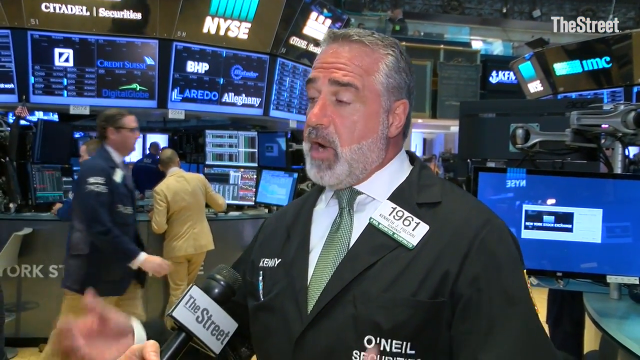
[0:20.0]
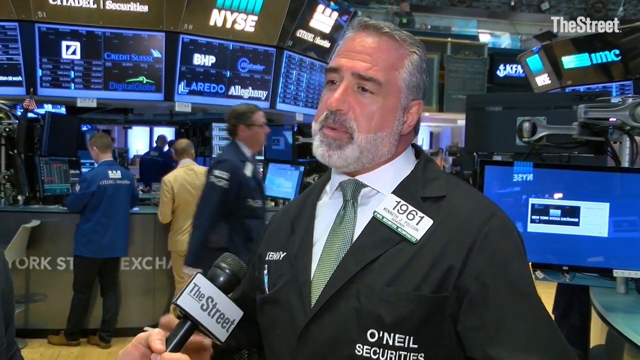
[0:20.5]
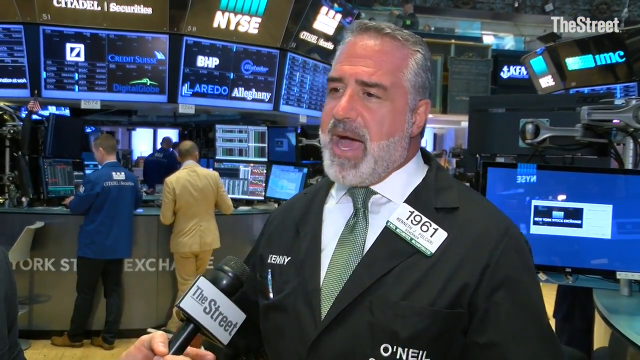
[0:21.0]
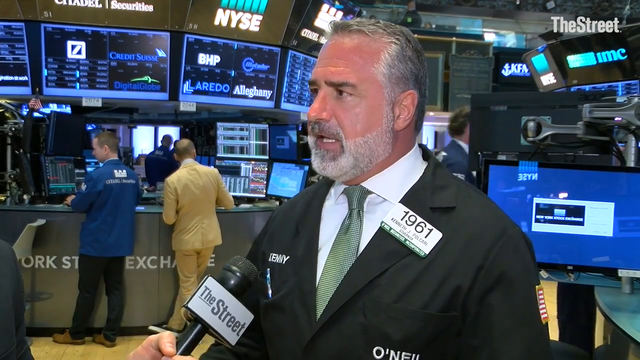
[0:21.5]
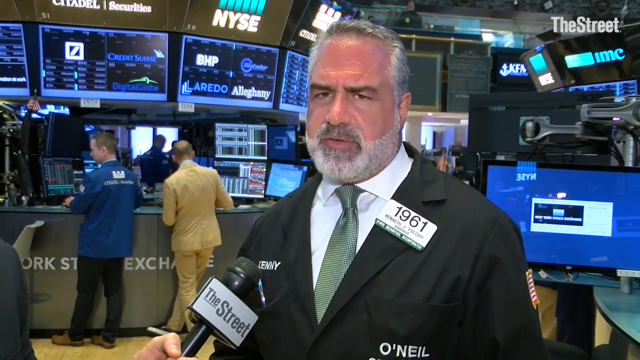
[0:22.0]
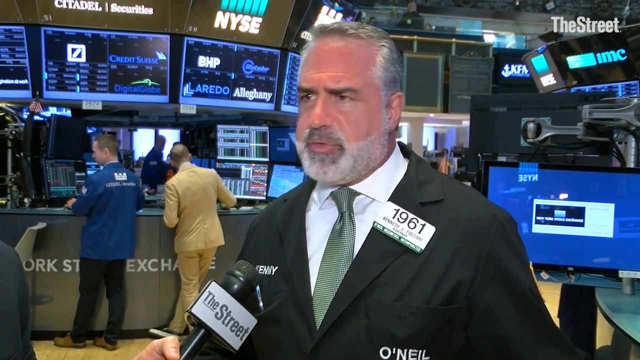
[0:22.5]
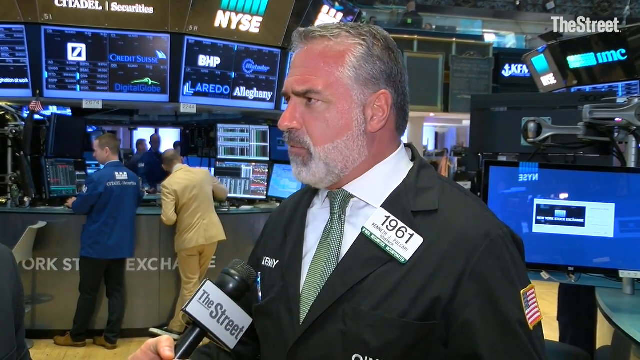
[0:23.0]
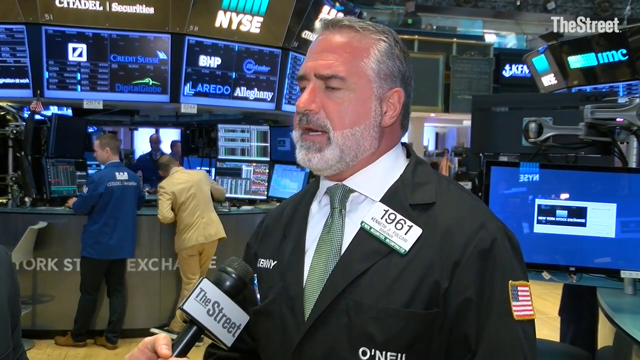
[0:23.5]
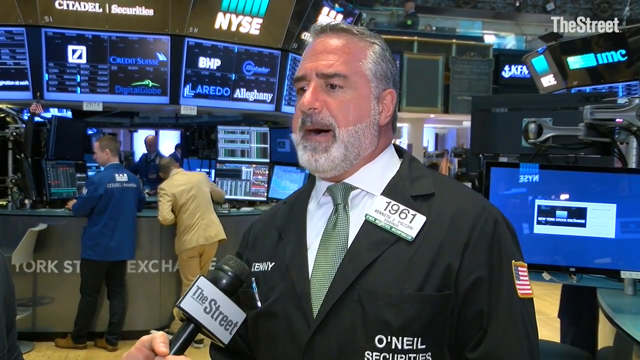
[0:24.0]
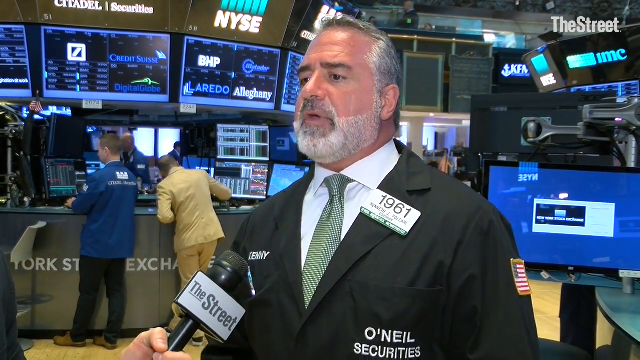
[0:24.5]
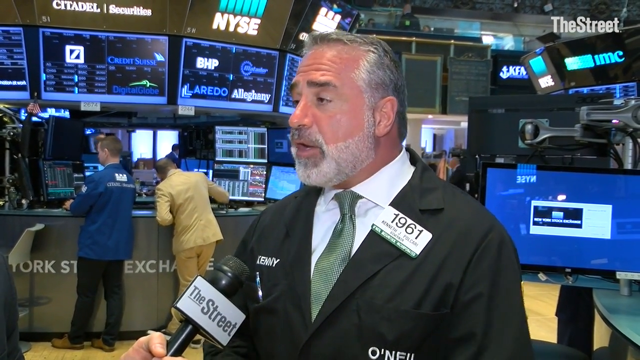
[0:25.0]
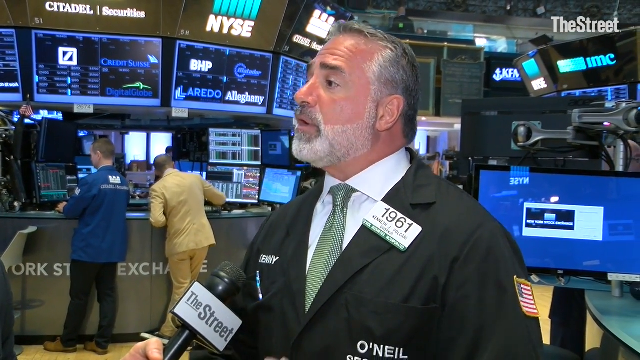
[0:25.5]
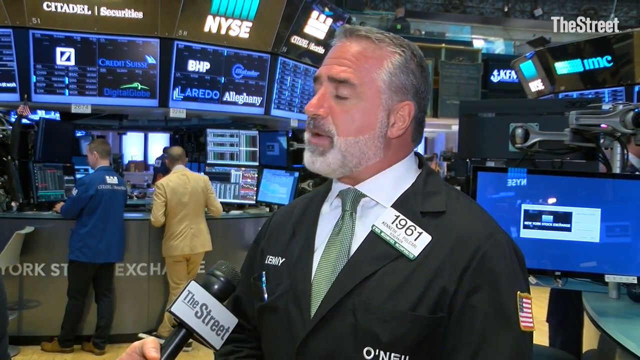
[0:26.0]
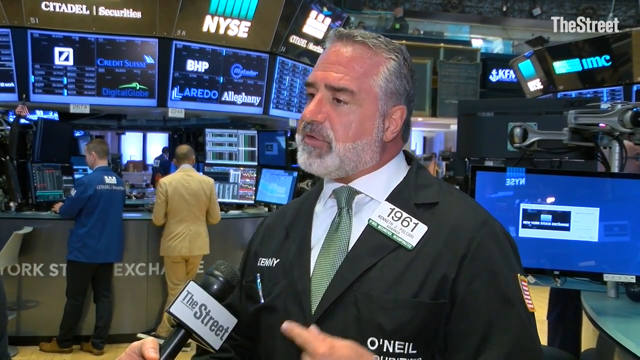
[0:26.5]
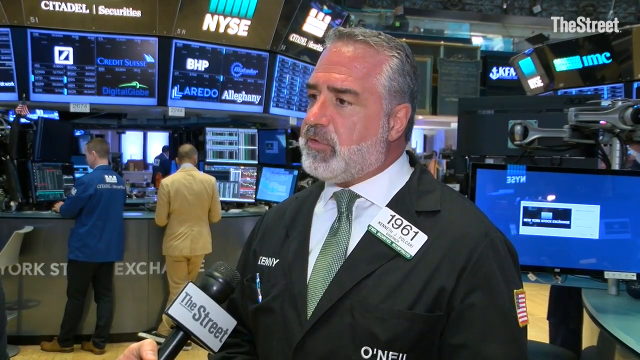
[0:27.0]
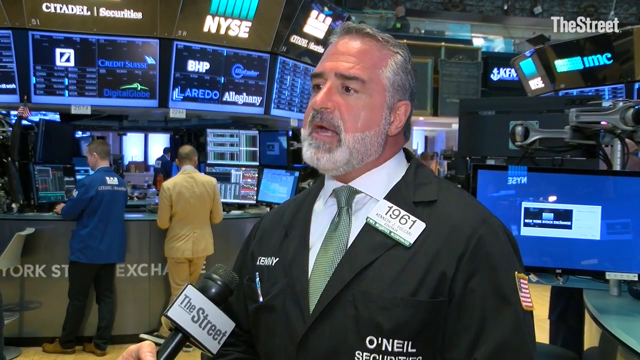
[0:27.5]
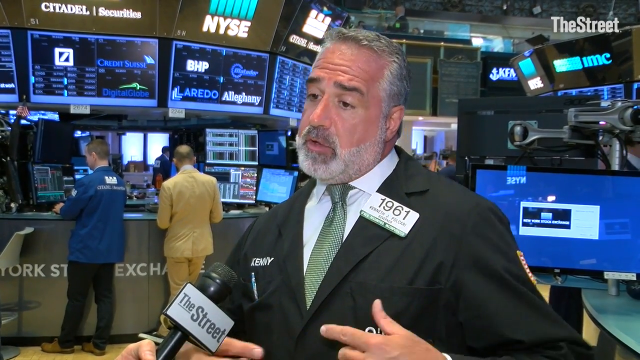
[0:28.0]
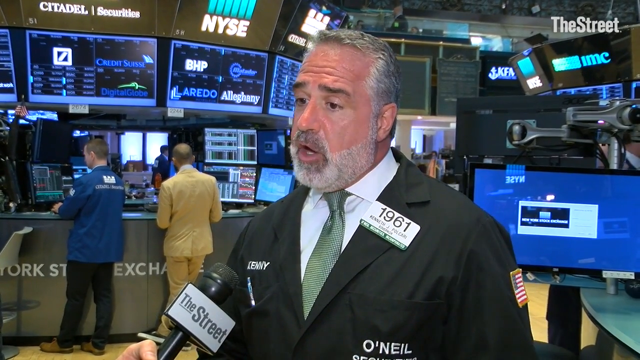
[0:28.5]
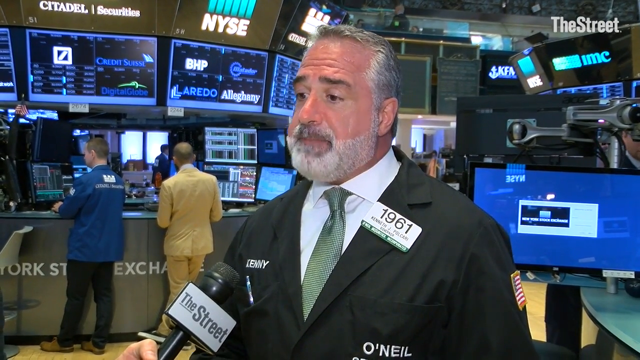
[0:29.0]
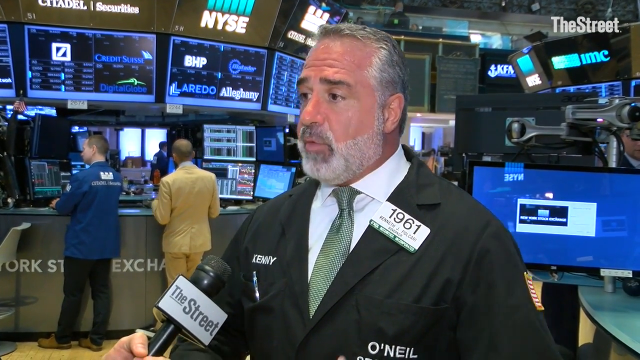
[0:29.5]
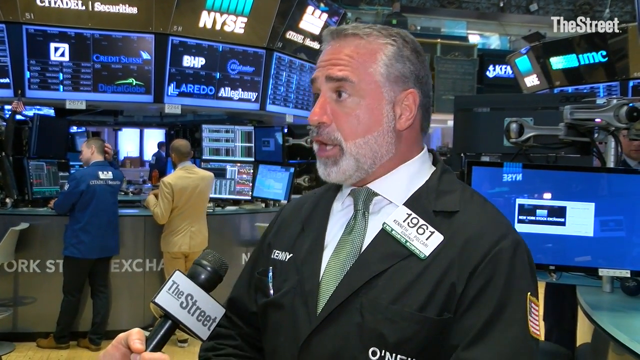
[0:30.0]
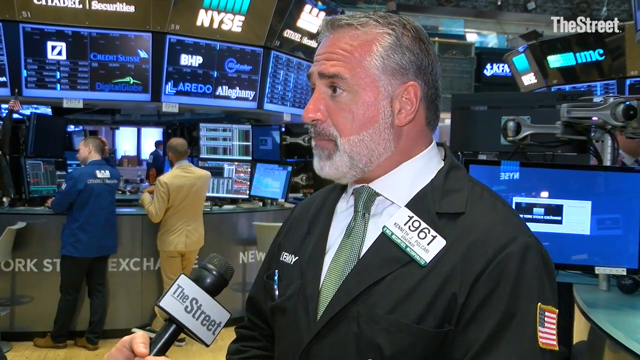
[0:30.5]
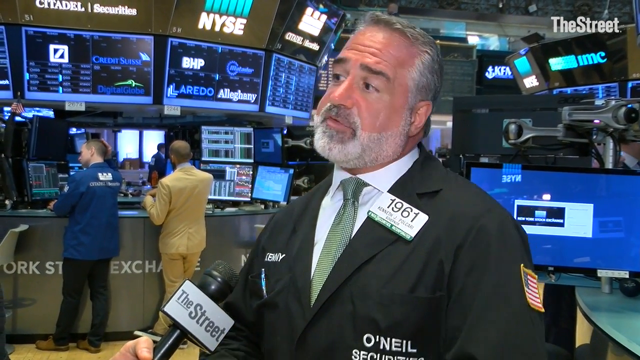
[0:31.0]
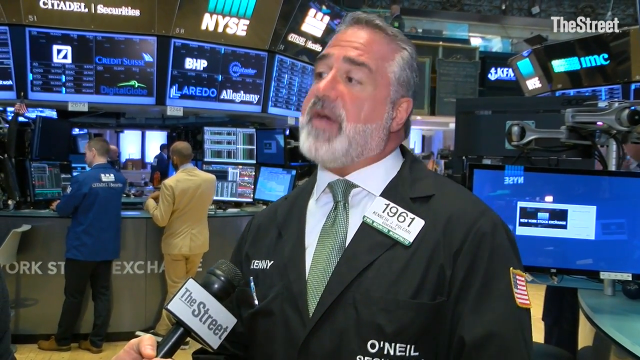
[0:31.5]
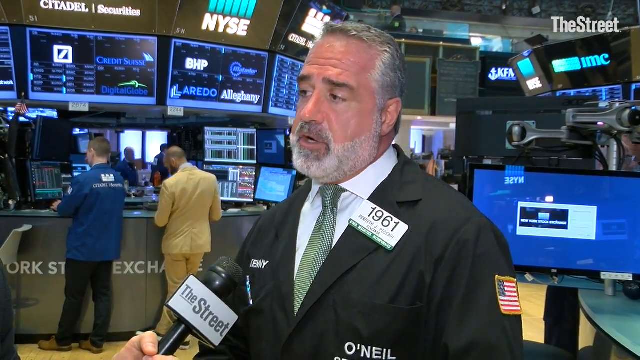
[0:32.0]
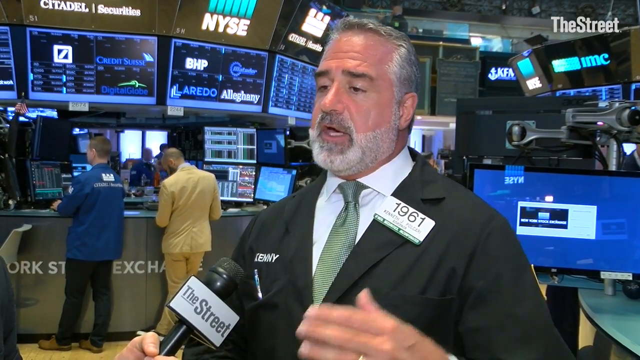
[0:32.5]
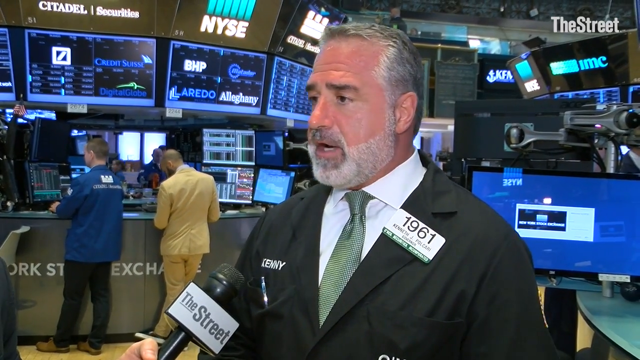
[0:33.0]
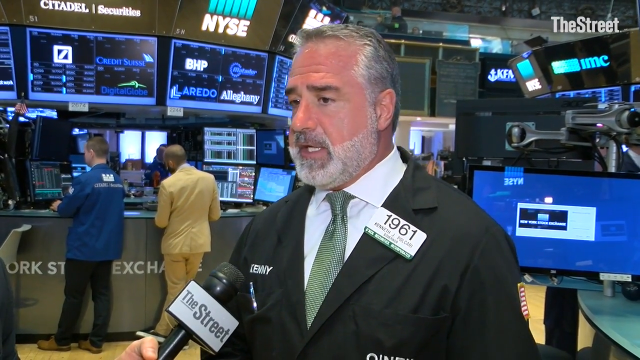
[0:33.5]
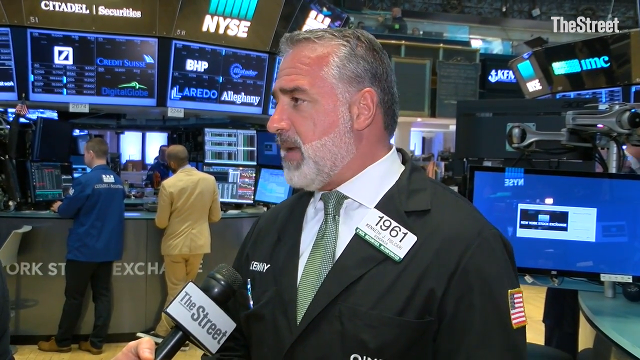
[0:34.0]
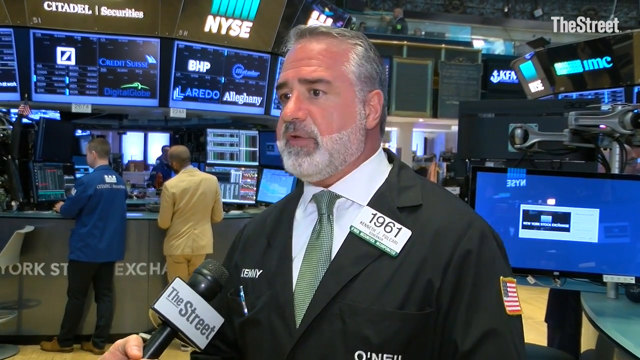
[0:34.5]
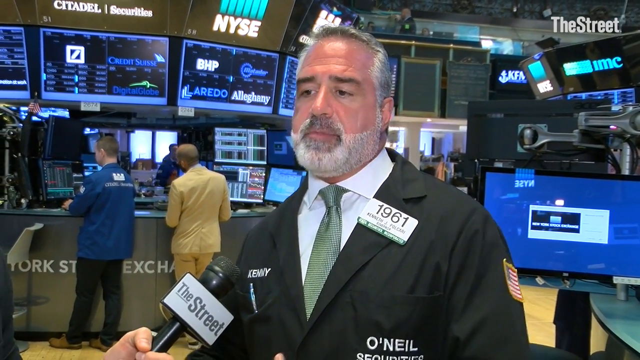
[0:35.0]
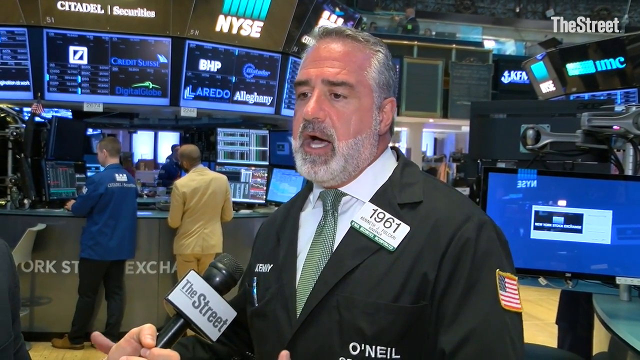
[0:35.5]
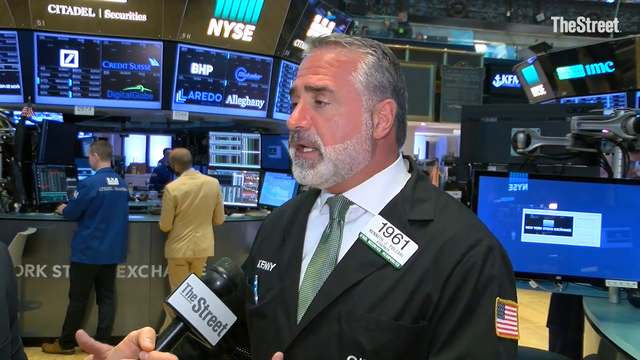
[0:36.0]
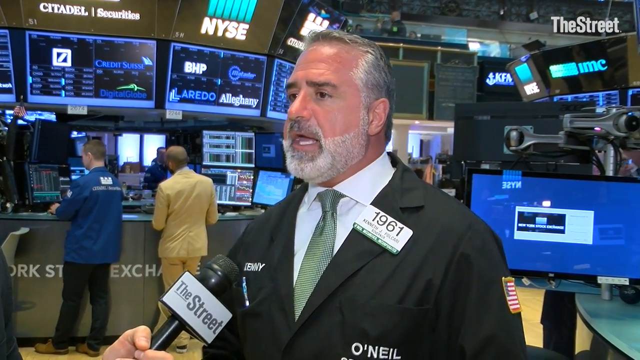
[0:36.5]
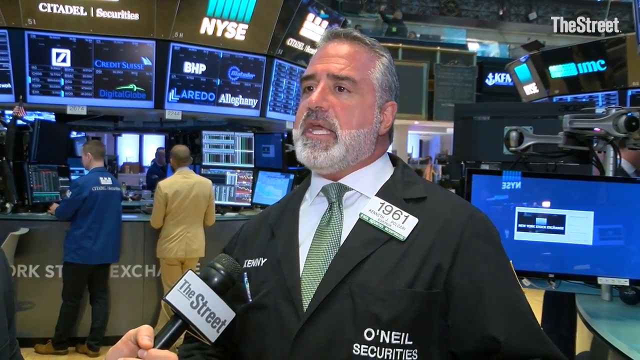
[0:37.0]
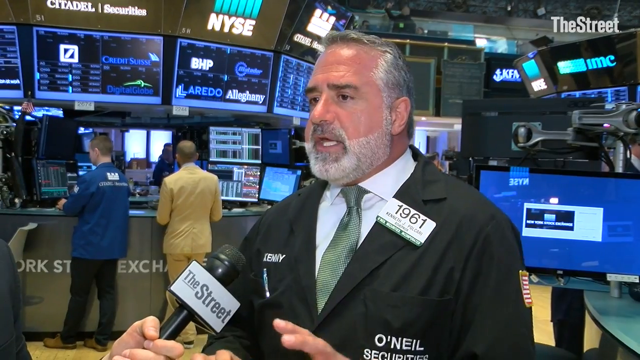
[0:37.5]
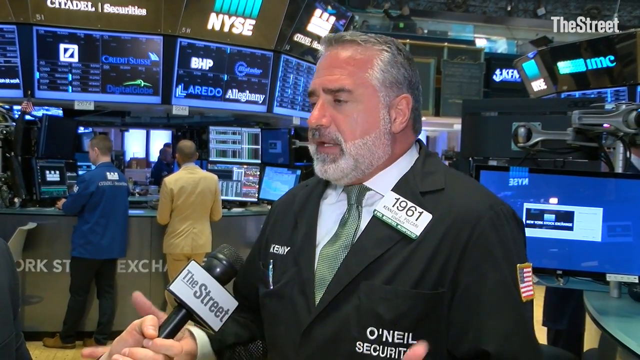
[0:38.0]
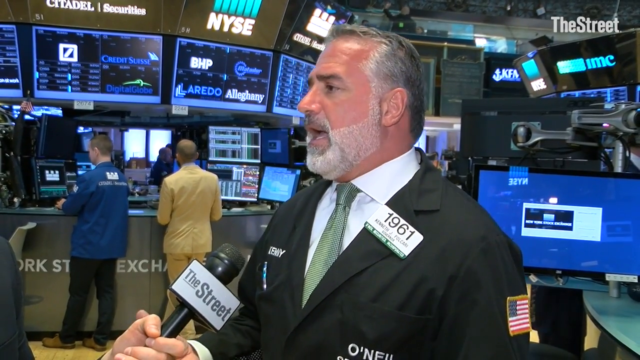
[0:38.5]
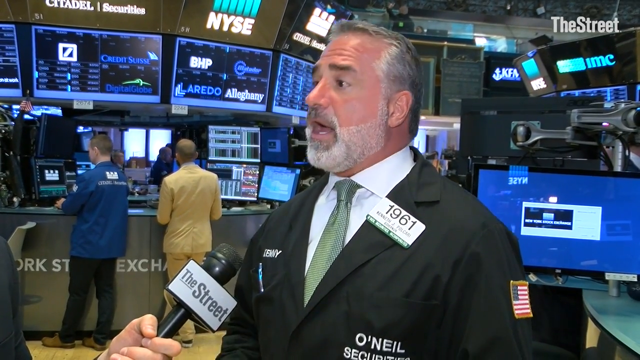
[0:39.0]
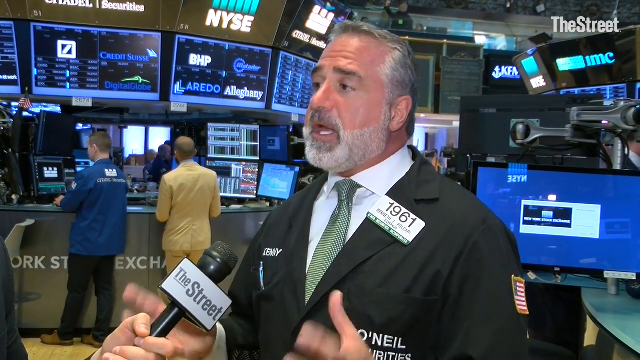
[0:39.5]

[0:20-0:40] The man from O'Neill Securities, named Kenny and identified by the number 1961, is probably giving his take on the $3.5 billion stake in Nestle. In the back are many different screens showing different companies, and the New York Stock Exchange is visible. People working for Citadel Securities are everywhere, wearing blue uniforms with "Citadel Securities" on the back. A man in some kind of yellow suit is in the front by the counter. There are many charts and a lot of digital activity, with companies such as BHP, Algany, Aldor and IMC on the screens. All the screens show moving text and moving charts, and there is a lot of blue in the back, with many blue screens and double-mounted monitors. Screens are everywhere.